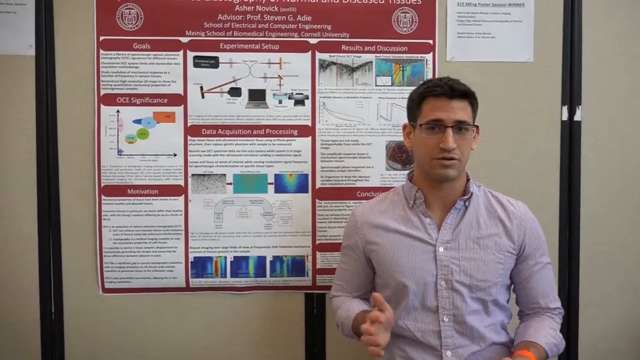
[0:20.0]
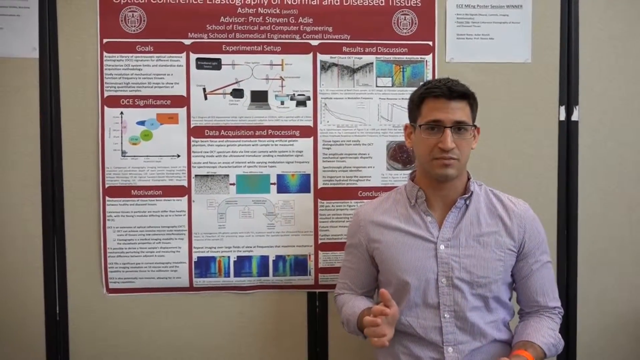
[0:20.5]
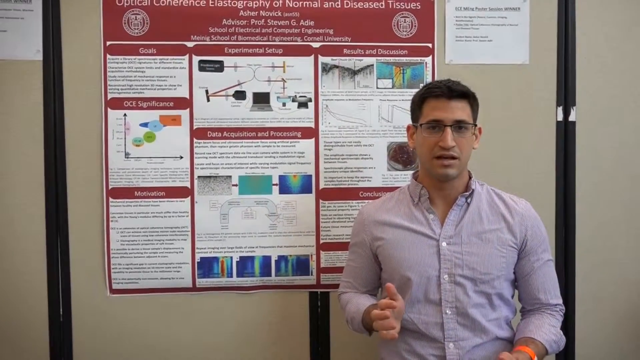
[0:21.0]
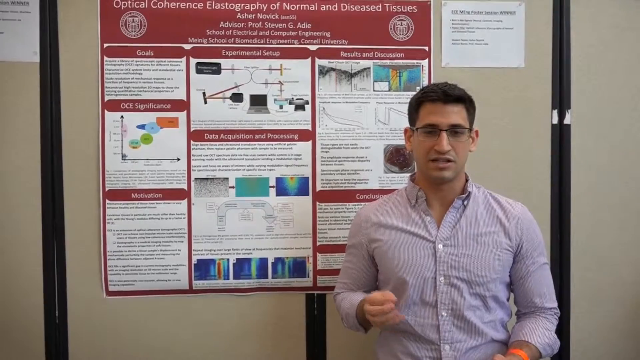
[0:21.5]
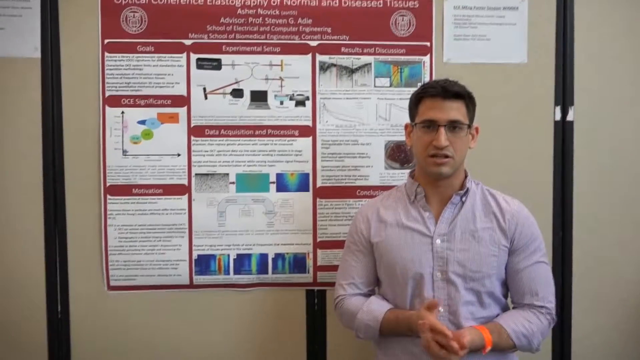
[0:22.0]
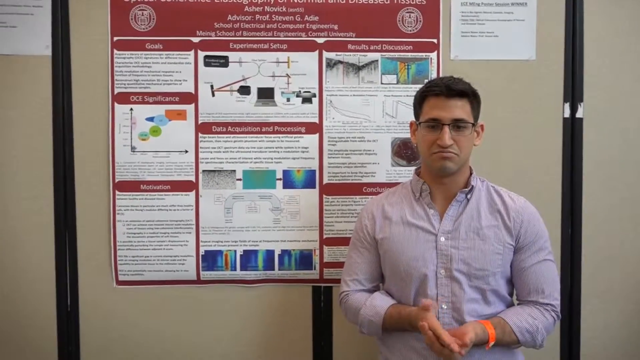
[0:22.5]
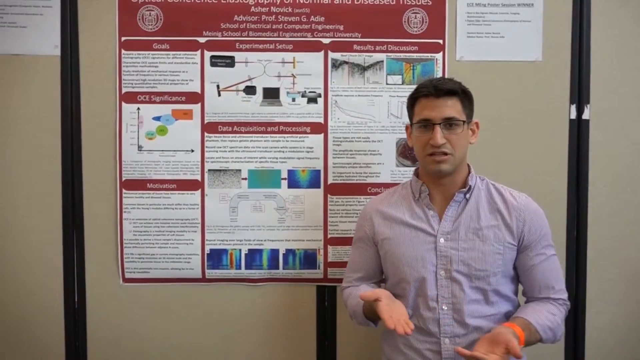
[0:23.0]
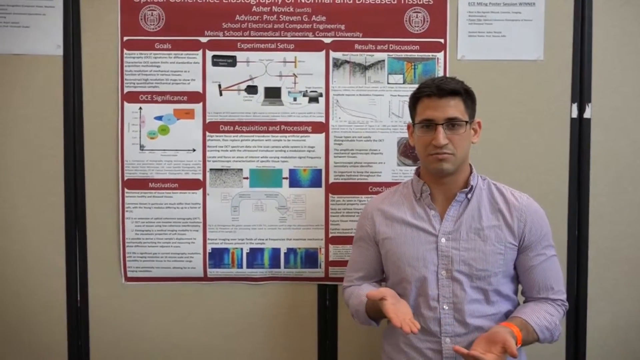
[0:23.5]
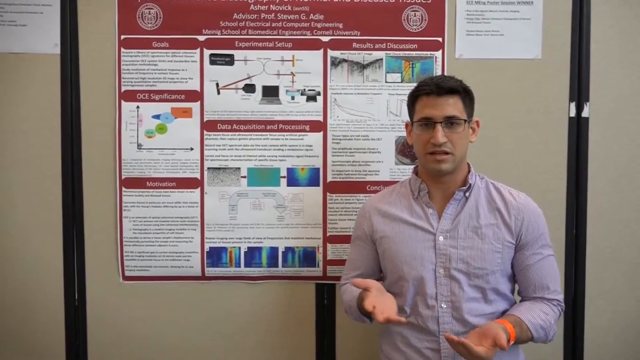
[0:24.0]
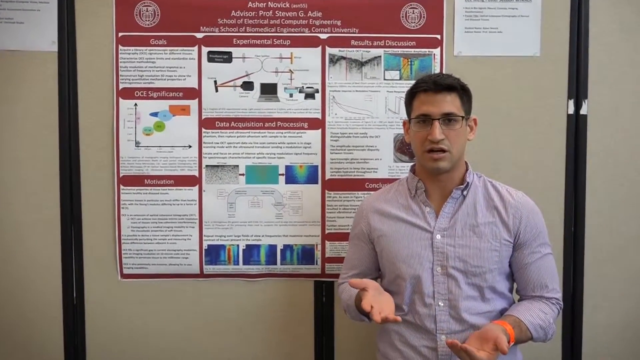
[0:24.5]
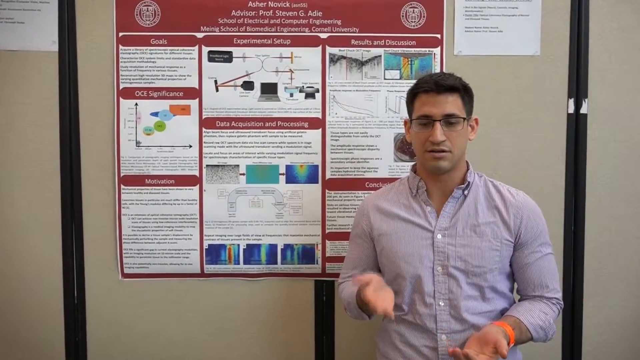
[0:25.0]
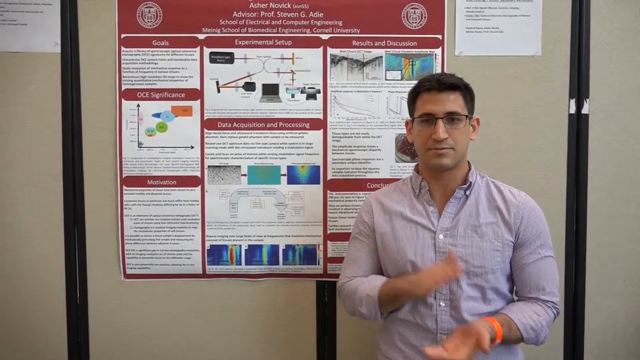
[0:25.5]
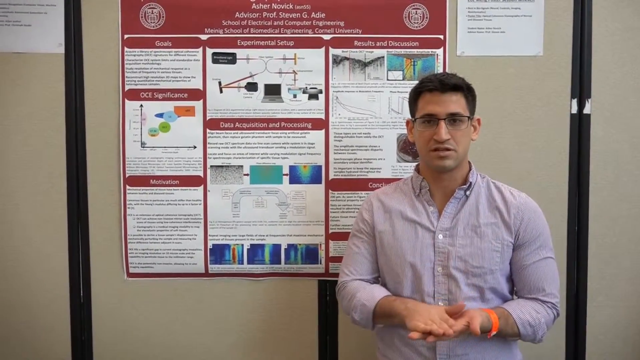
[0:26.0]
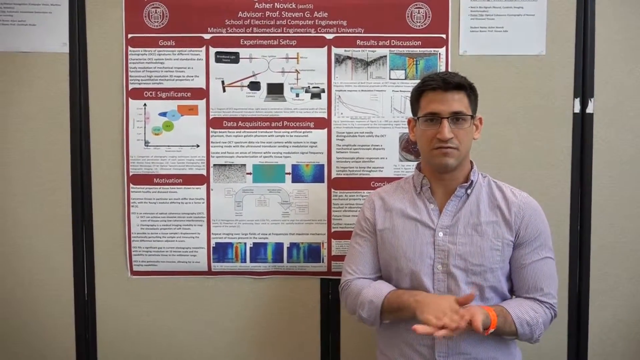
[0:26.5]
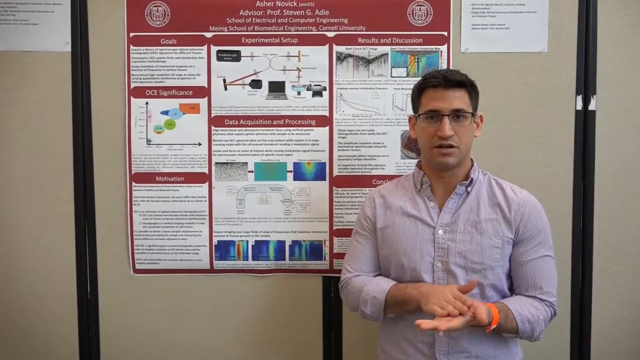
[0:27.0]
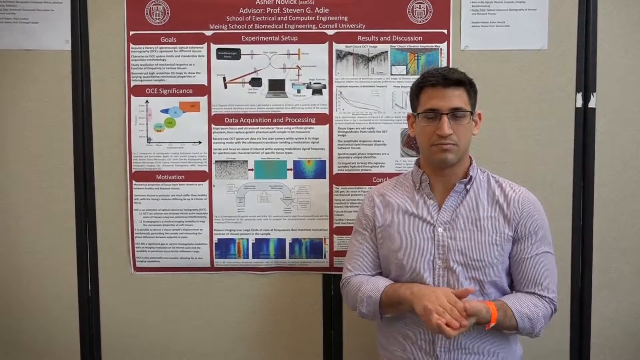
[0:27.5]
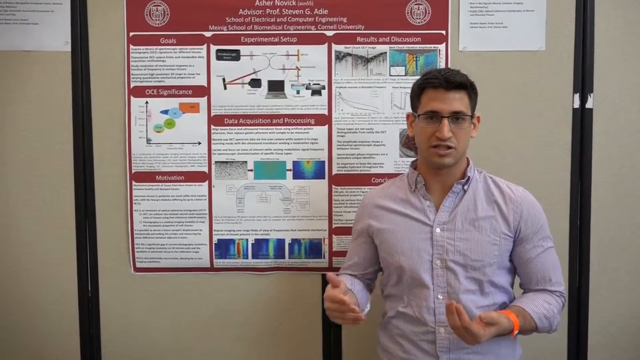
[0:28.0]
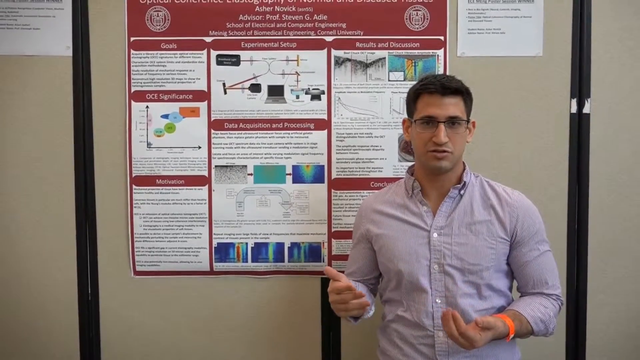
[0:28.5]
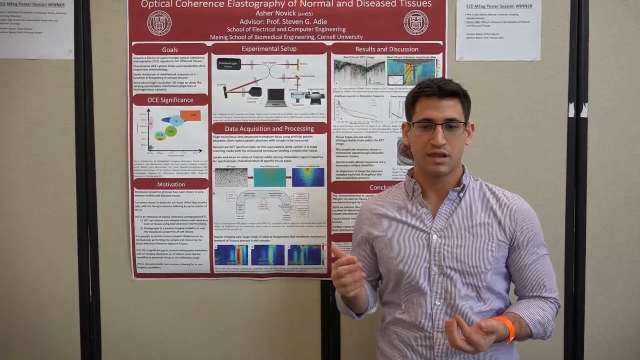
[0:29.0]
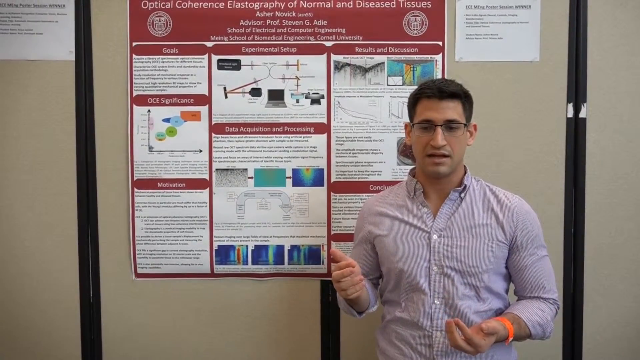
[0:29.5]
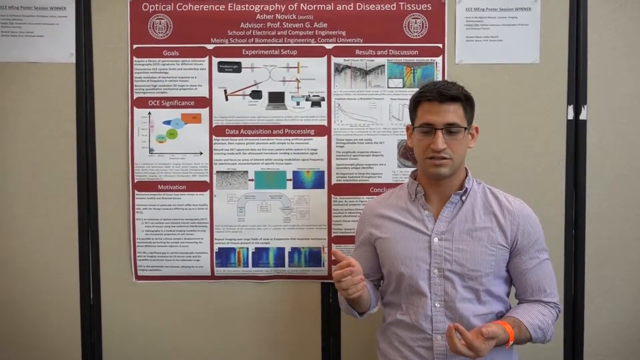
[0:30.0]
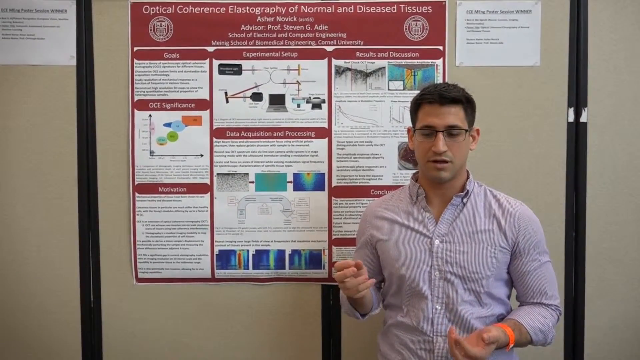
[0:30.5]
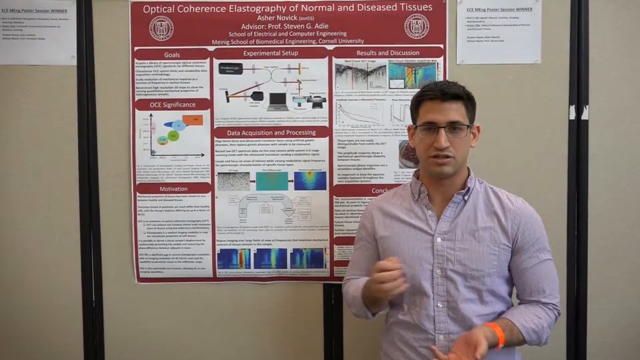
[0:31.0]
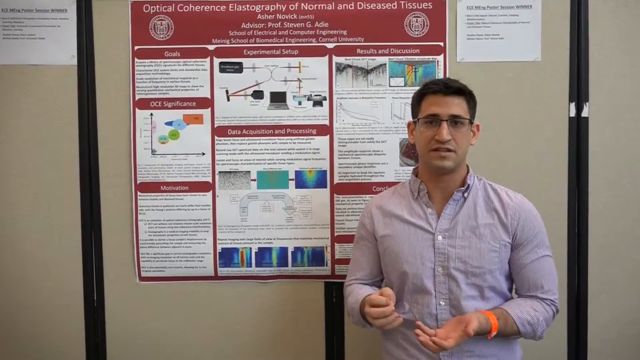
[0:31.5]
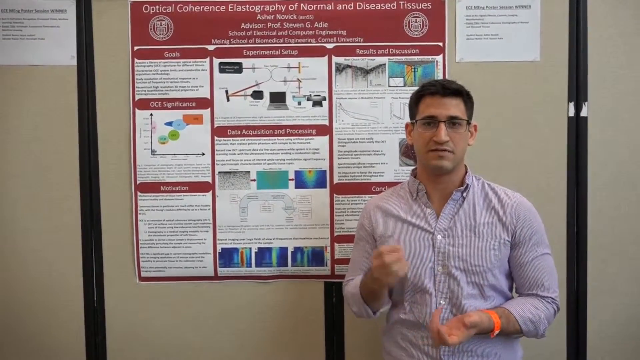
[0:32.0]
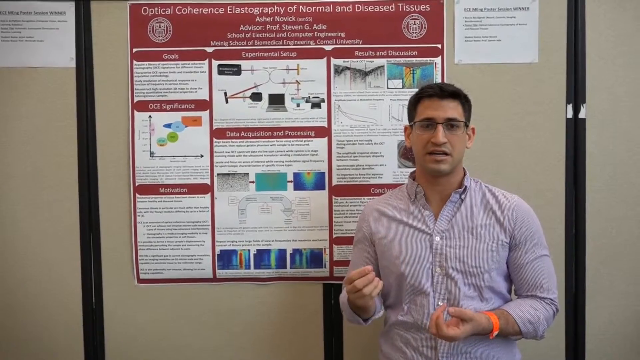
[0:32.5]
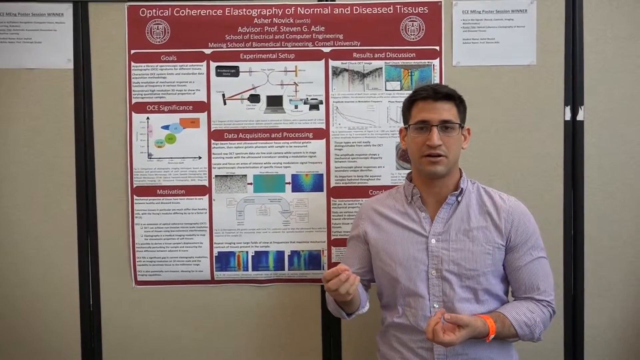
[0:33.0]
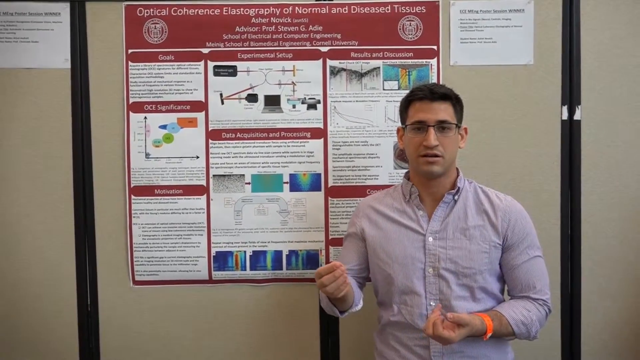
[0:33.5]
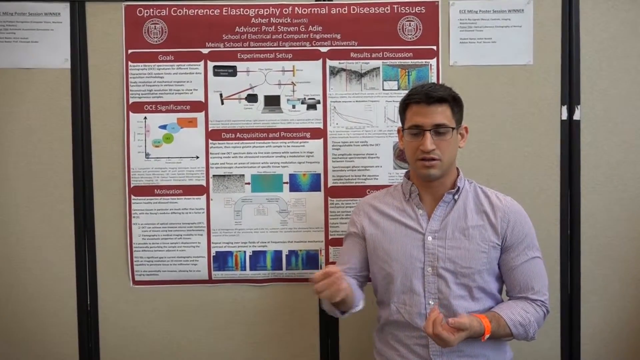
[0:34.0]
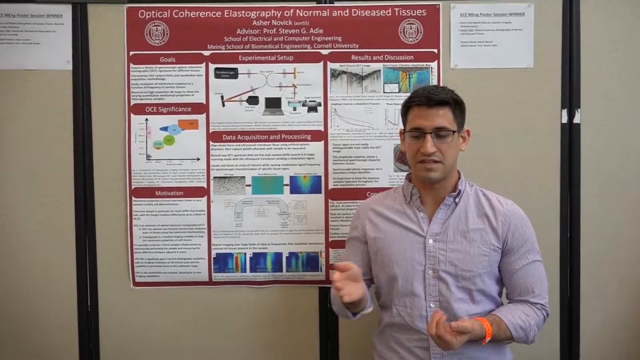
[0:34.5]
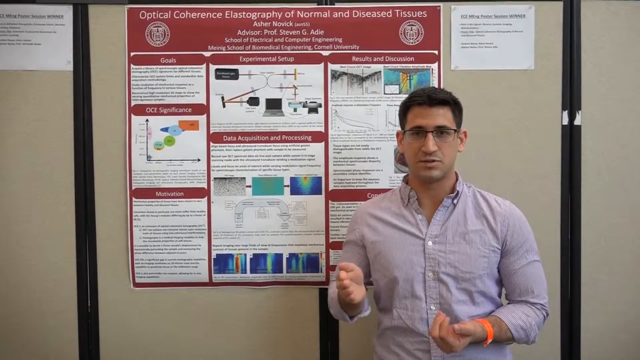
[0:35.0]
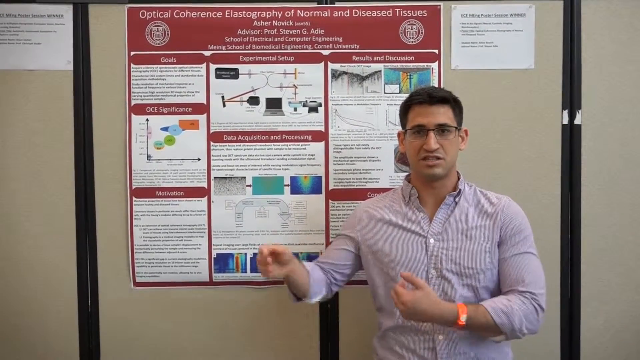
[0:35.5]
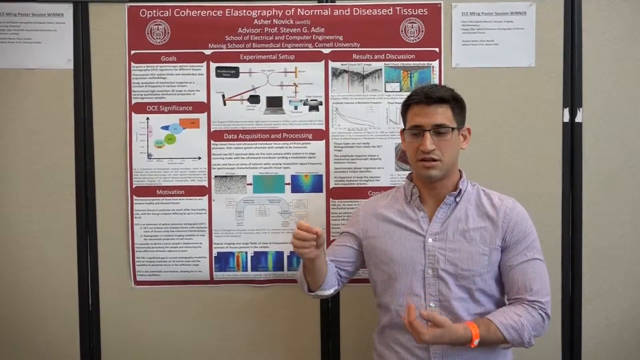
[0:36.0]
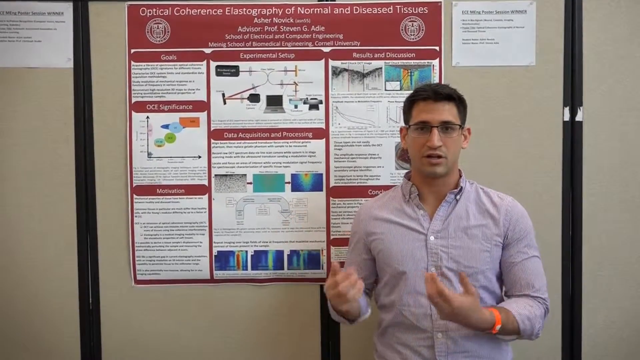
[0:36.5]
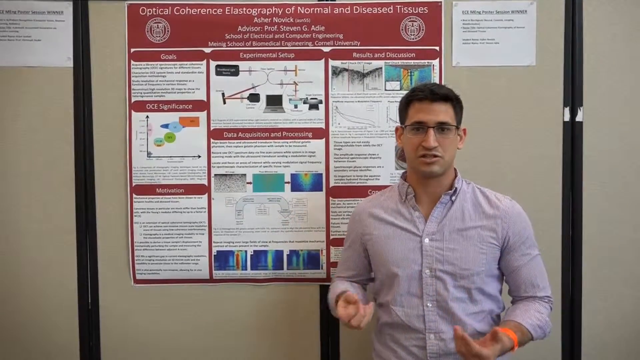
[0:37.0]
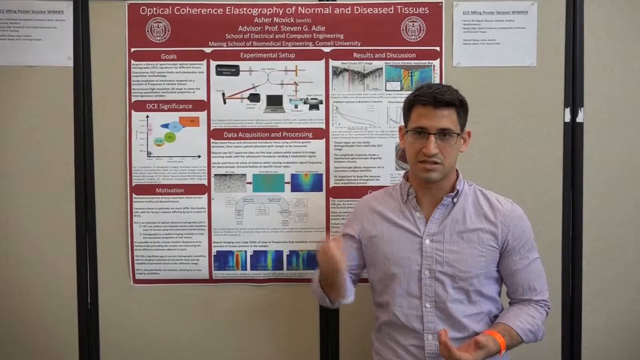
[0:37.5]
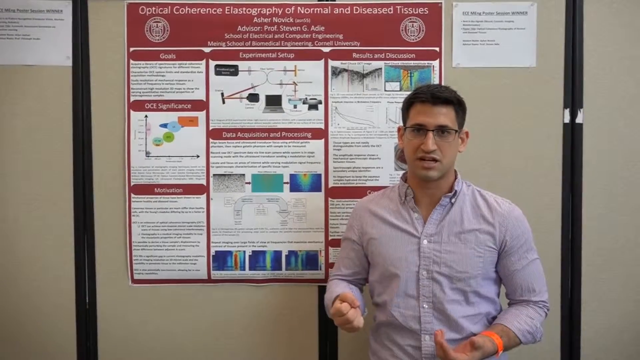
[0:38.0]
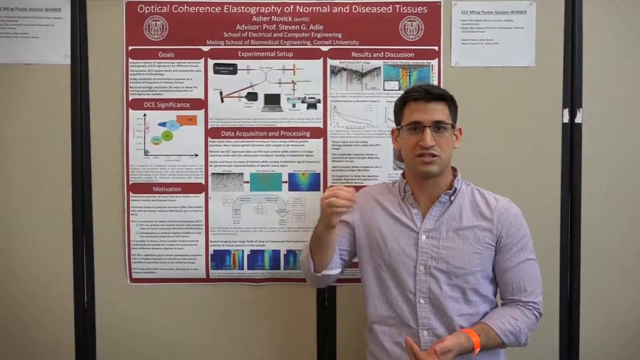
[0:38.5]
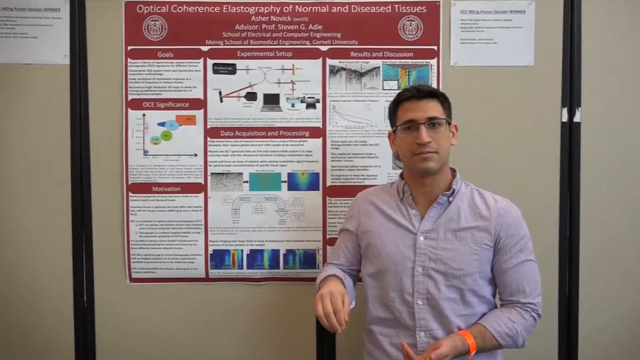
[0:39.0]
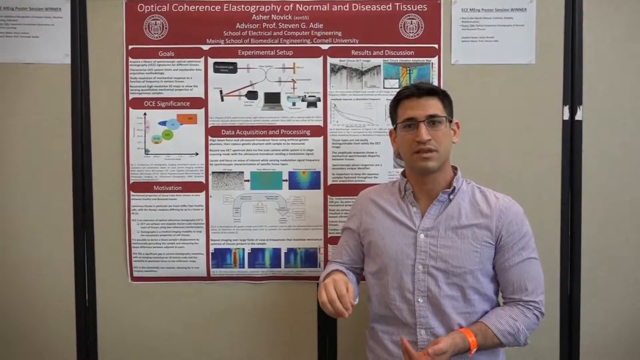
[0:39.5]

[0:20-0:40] A man in a blue button-down shirt stands talking, moving his head and hands as he speaks. Behind him is a red and white sign, and two white pieces of paper are thumbtacked to the wall. The wall is beige, a folding type of wall with black middles. He has glasses and dark hair, looks straight ahead, and wears an orange bracelet on his other arm. He moves his hands back and forth and up and down, points up and down, rubs his hands together, lifts his left hand, and makes cutting motions, lifting motions, up-and-down motions and pouring motions. A chart behind him reads "Asher Novick adviser professor Steven G" and "optical coherence elastography of normal and diseased tissue." His shirt collar is down, and the shirt has a pocket on the front.